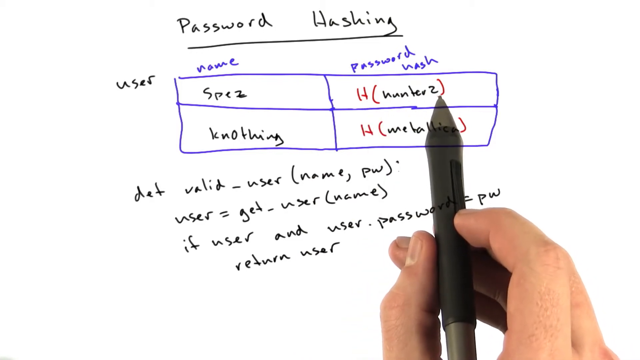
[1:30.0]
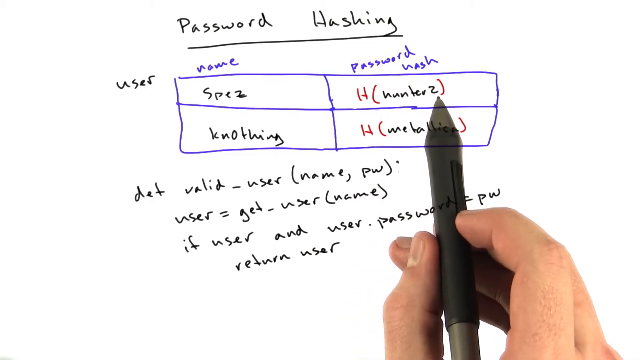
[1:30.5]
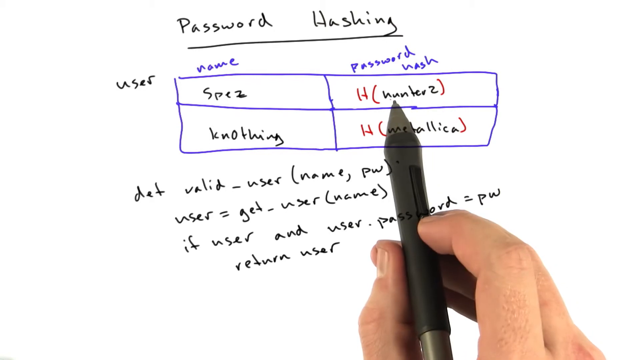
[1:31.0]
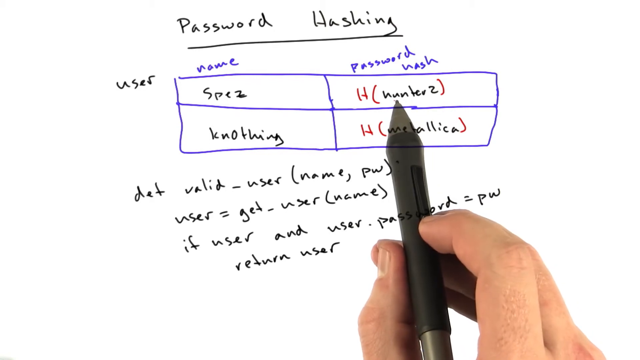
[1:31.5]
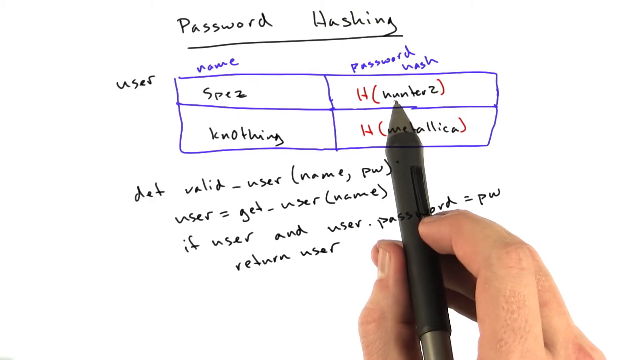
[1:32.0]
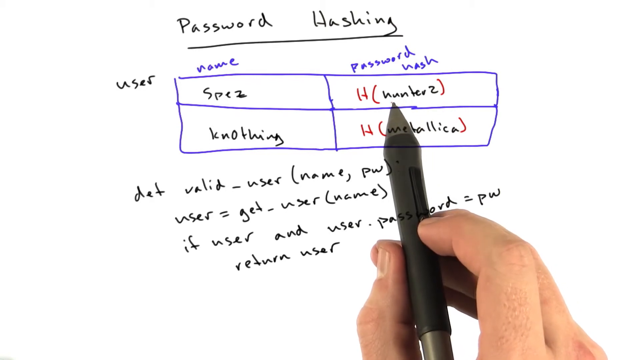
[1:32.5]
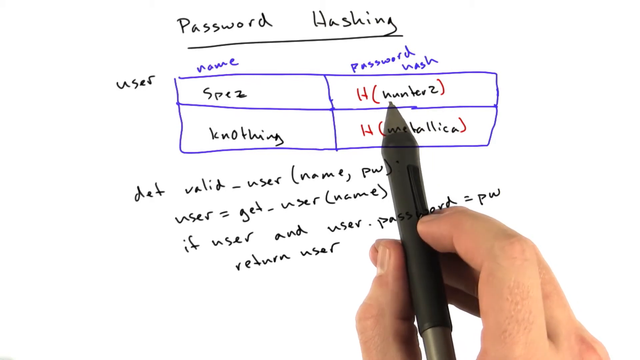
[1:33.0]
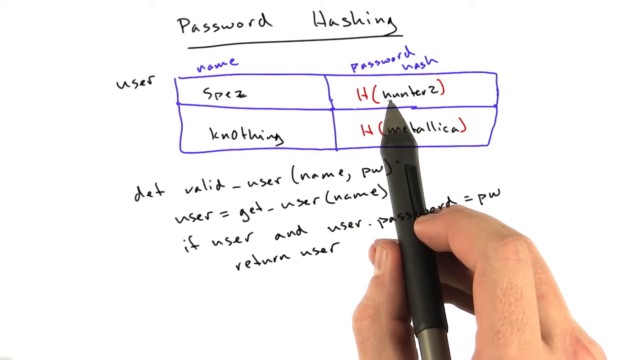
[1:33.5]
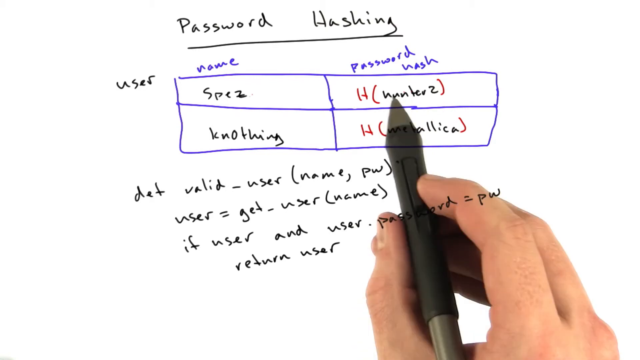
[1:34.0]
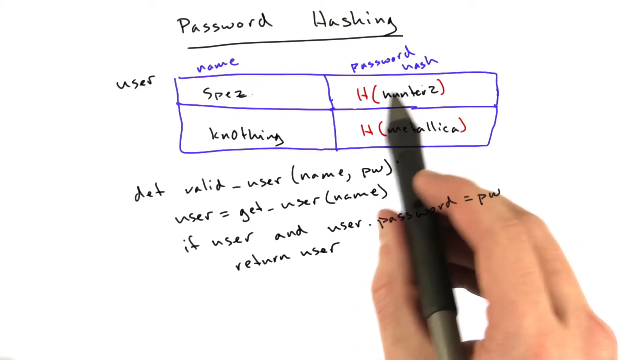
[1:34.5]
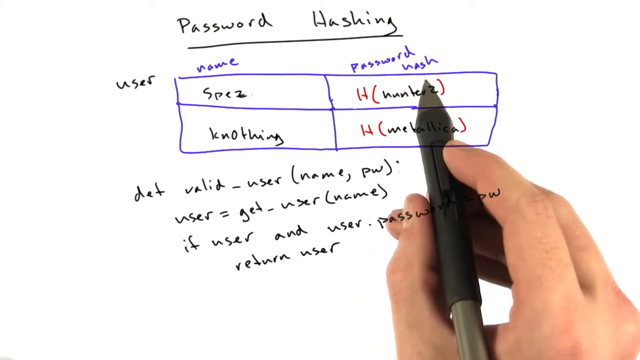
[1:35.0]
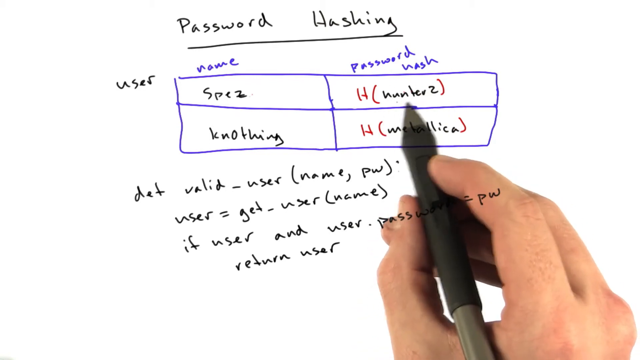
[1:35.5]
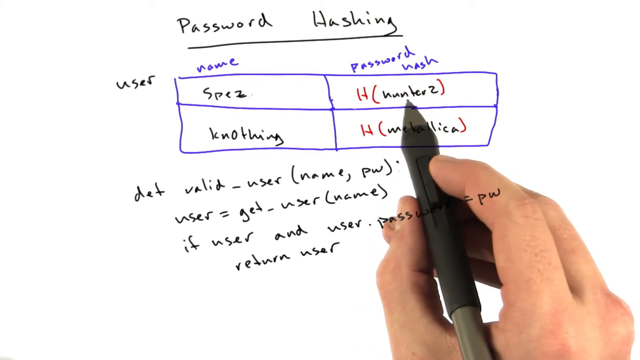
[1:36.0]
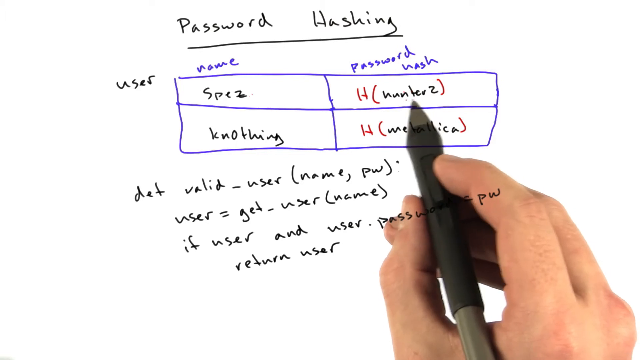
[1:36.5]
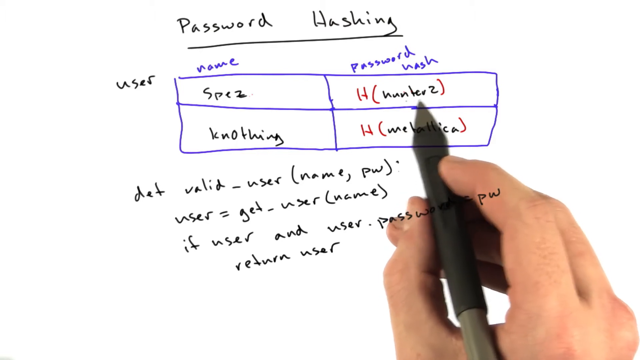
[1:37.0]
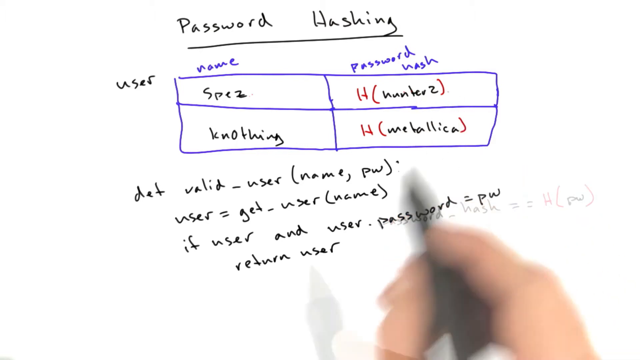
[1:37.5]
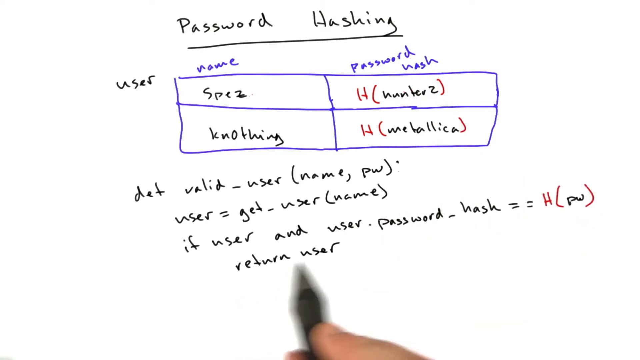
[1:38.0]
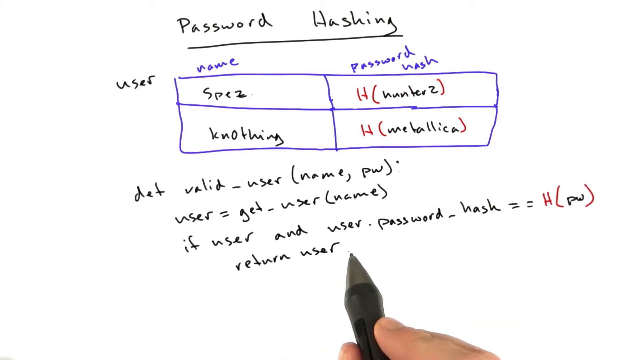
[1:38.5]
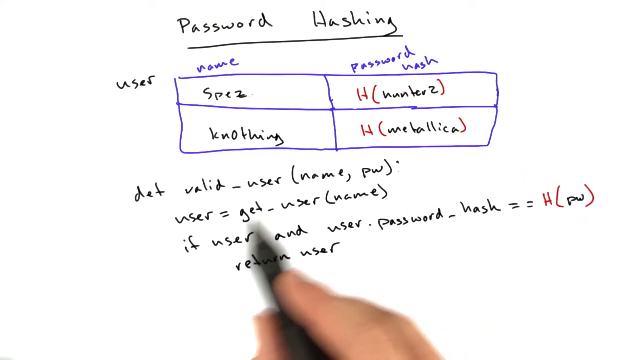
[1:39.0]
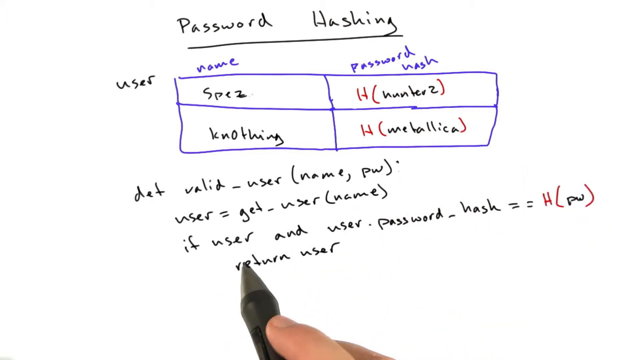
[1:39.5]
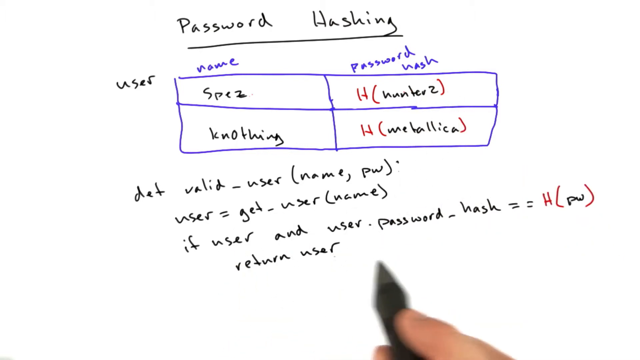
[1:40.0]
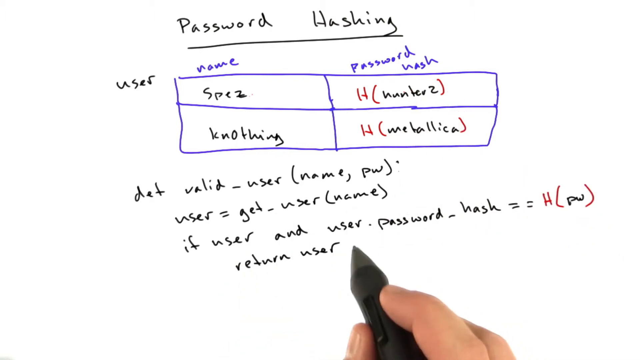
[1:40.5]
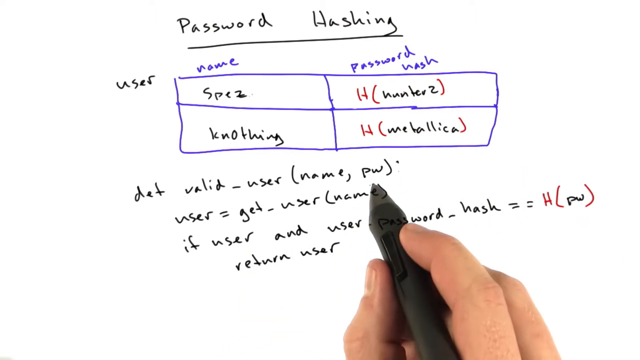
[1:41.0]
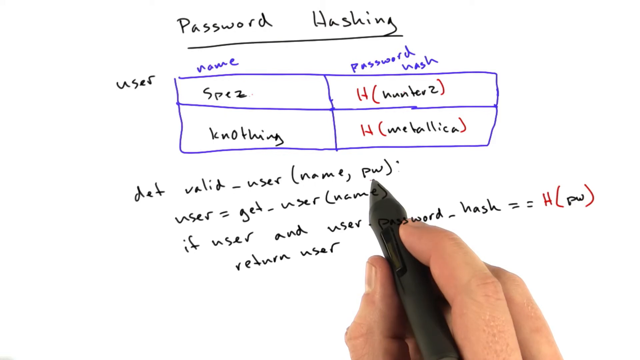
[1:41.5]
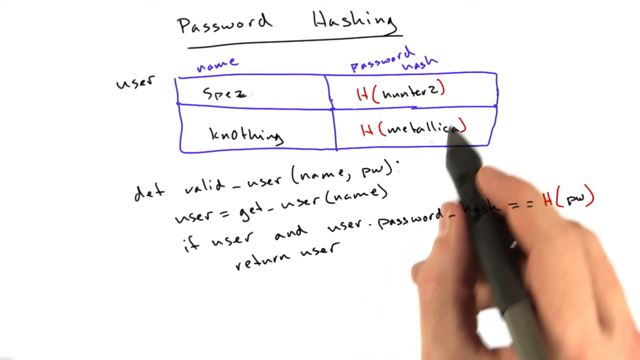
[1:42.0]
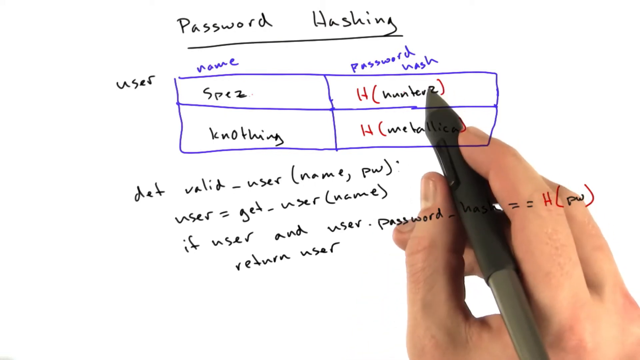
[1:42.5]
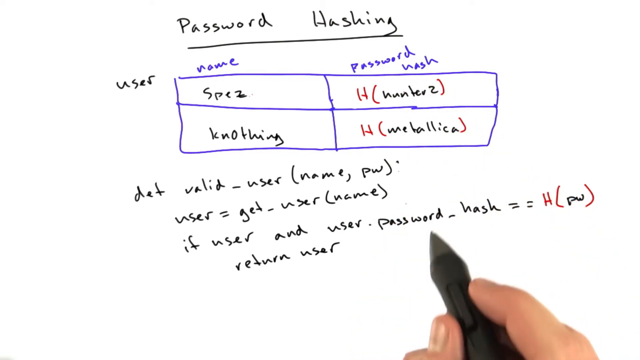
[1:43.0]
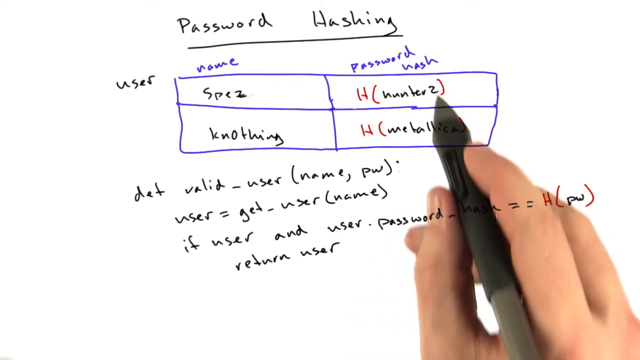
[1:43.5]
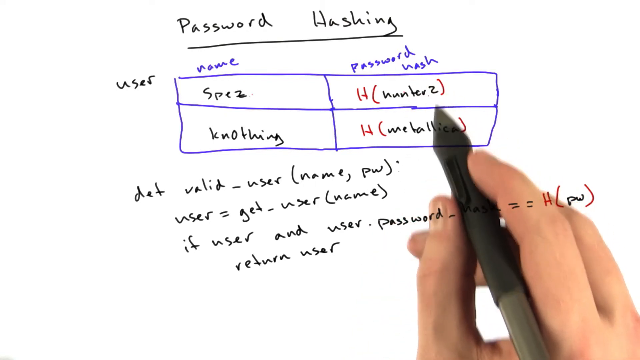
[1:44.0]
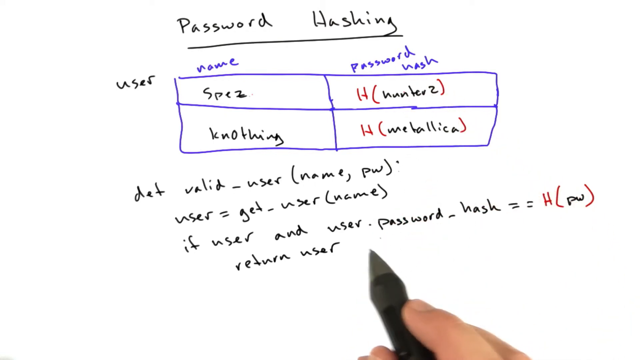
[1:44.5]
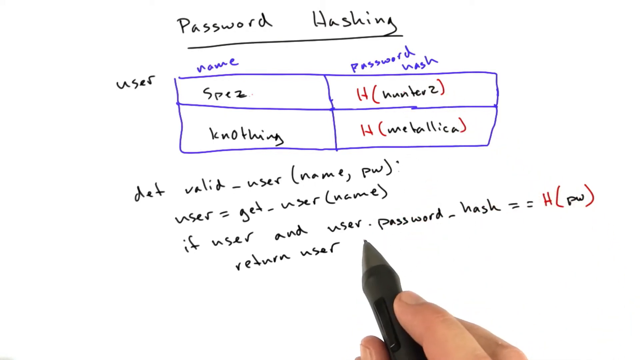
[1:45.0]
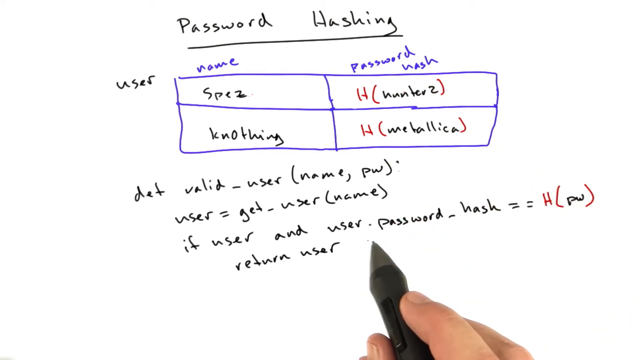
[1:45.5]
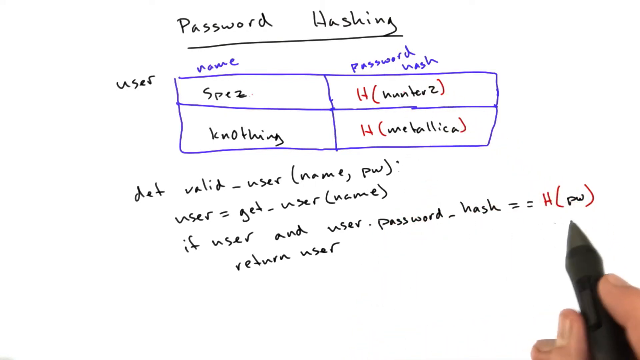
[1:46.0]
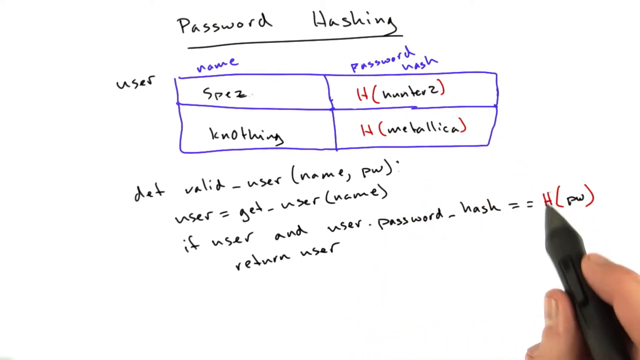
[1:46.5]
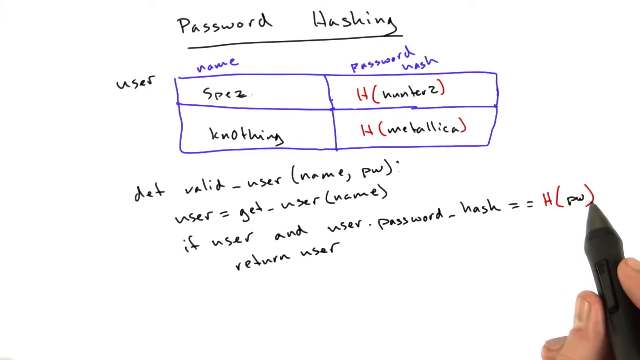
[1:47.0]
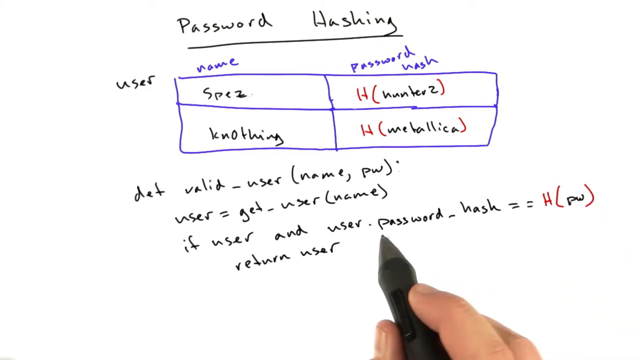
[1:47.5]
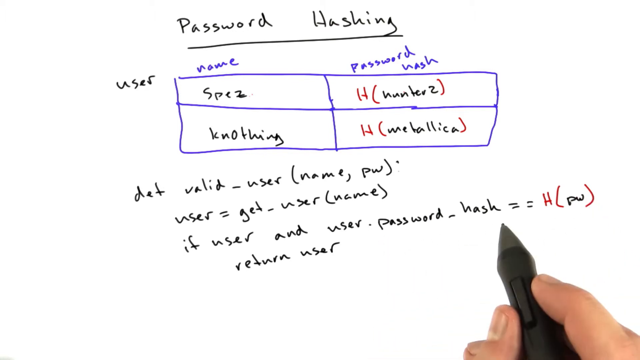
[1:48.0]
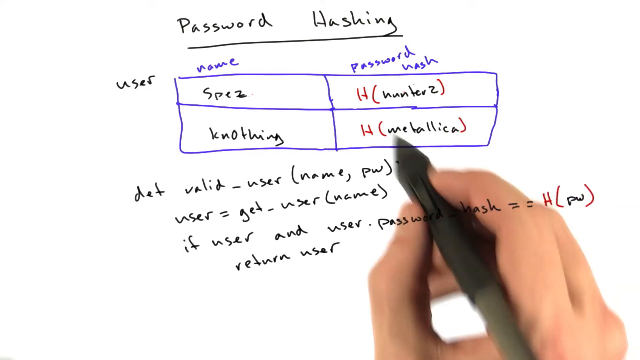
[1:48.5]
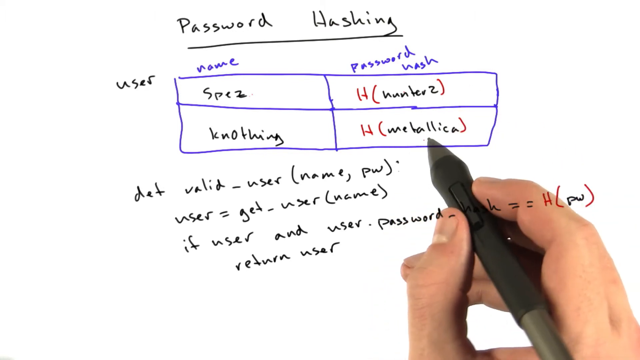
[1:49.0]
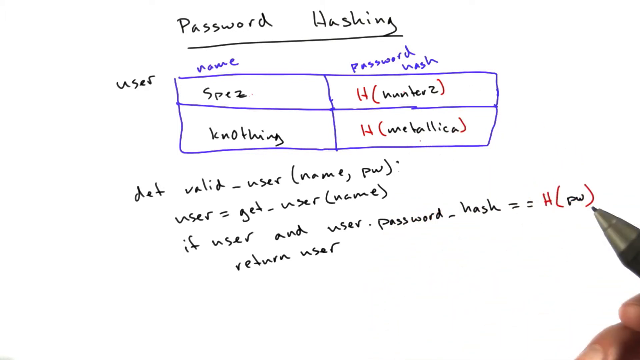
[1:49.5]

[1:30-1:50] The person continues explaining, moving the pen held between the fingers of his right hand from top to bottom, until he focuses on where he wrote user.password in the condition inside the validUser function, which checks whether the user exists and whether the password equals the password provided to the function. He changes this line so that it now compares the user's password hash with the result of the function h applied to the password, written as a variable called pw.